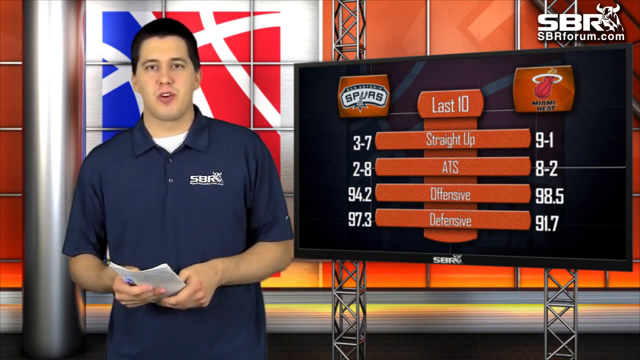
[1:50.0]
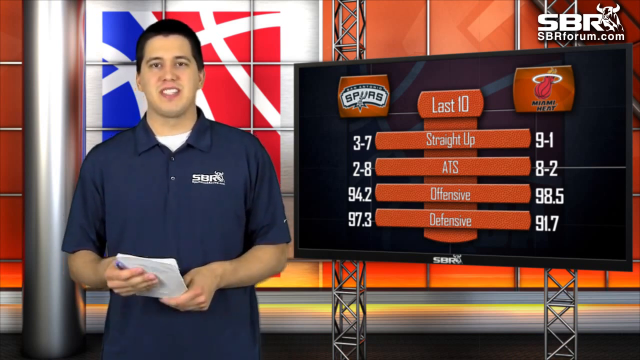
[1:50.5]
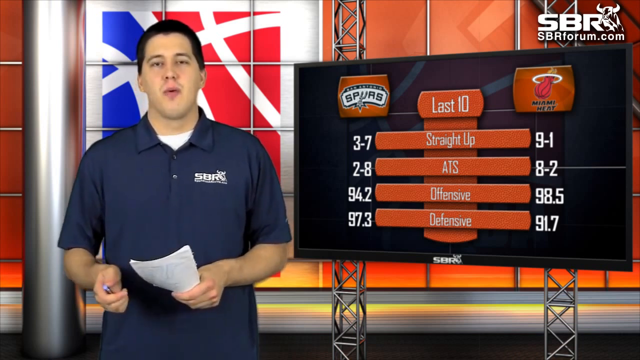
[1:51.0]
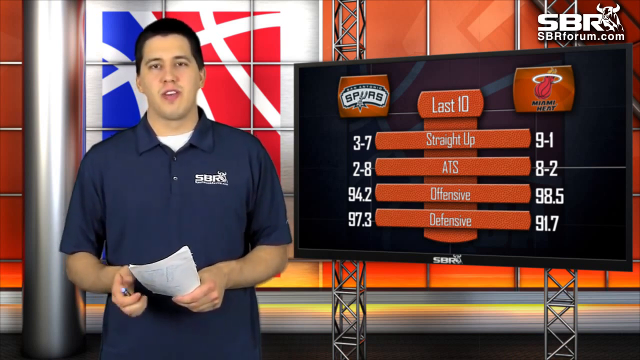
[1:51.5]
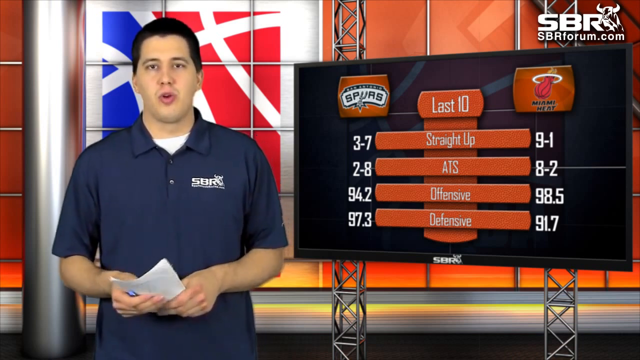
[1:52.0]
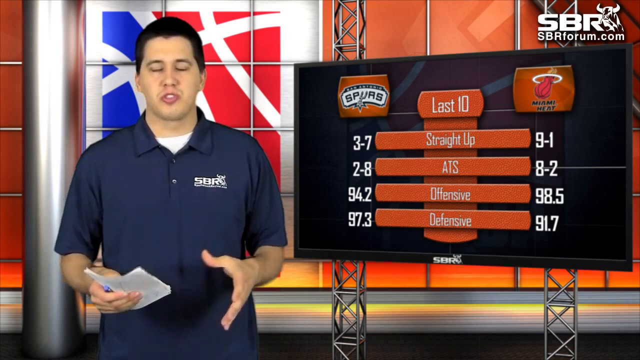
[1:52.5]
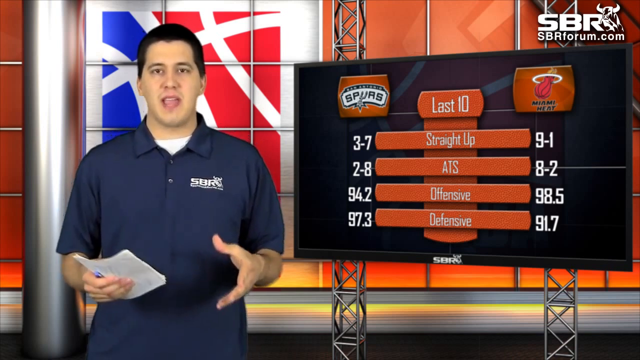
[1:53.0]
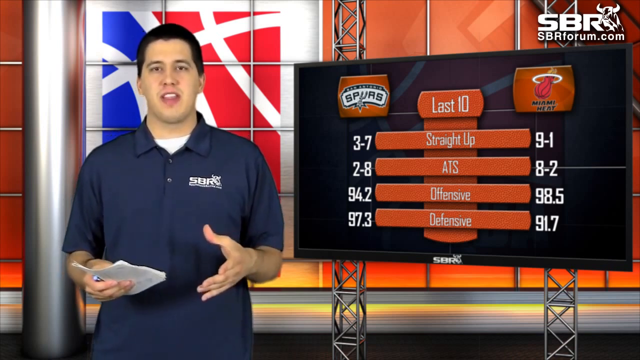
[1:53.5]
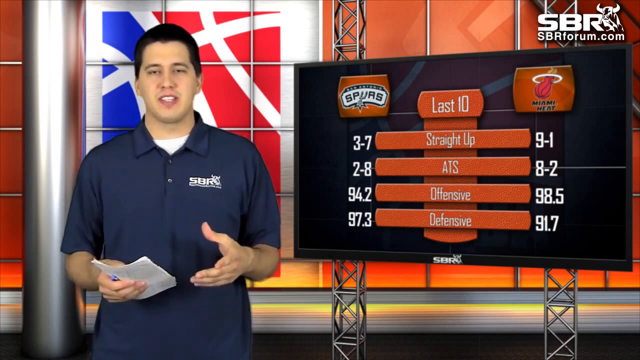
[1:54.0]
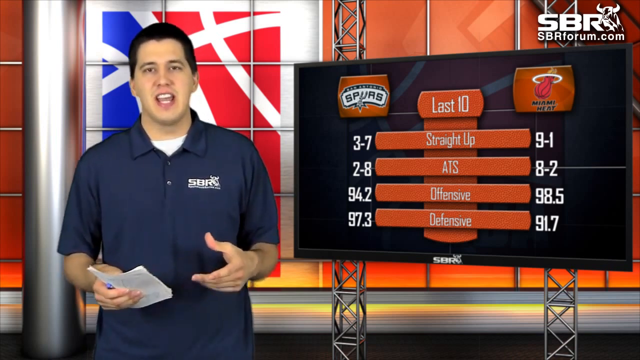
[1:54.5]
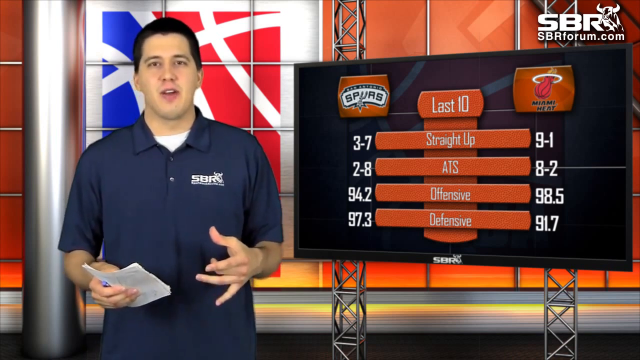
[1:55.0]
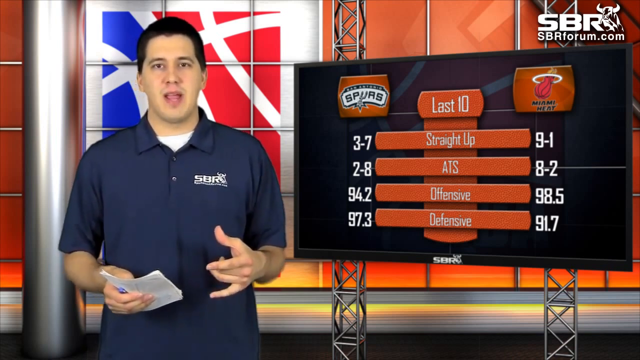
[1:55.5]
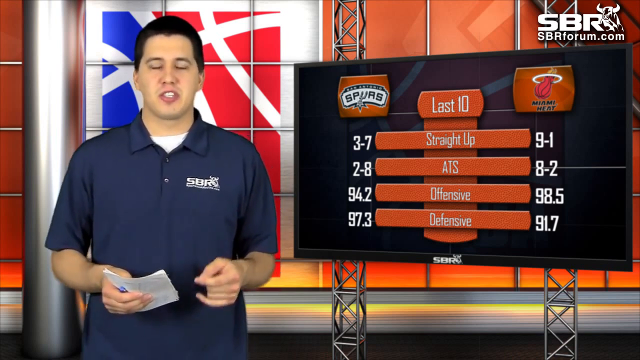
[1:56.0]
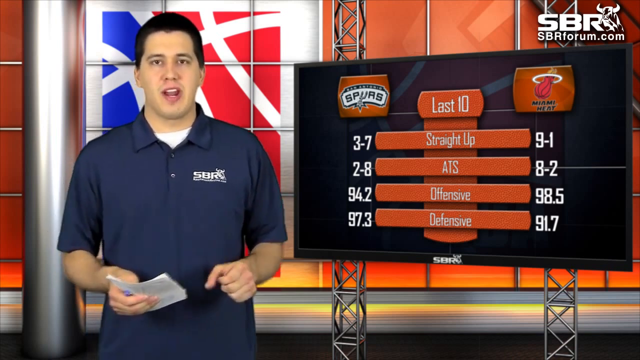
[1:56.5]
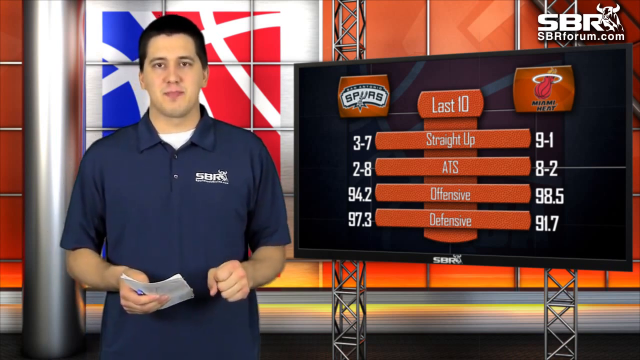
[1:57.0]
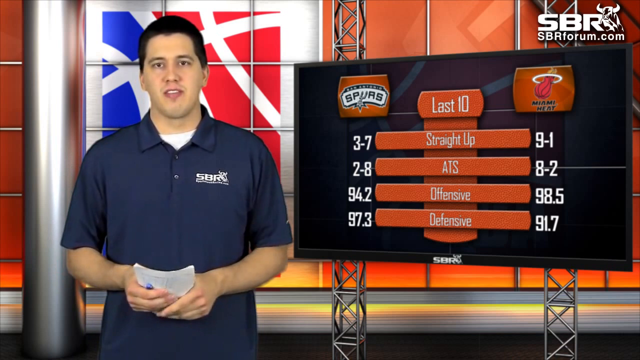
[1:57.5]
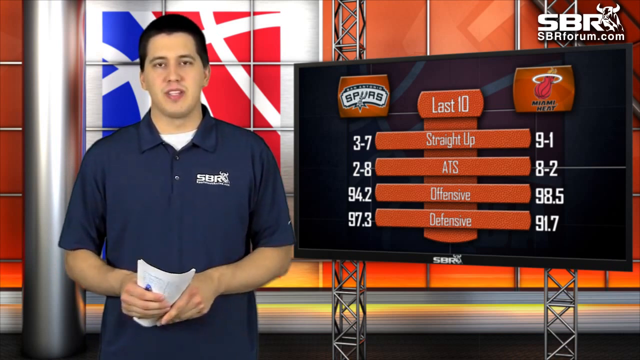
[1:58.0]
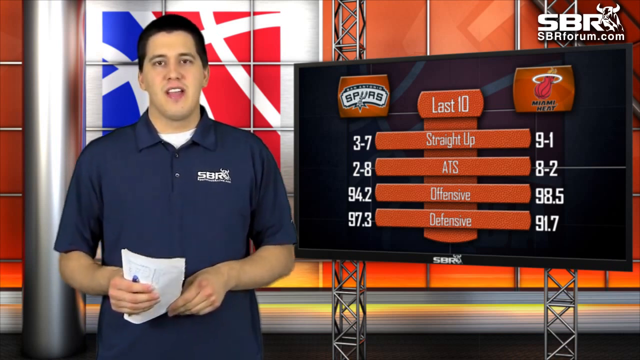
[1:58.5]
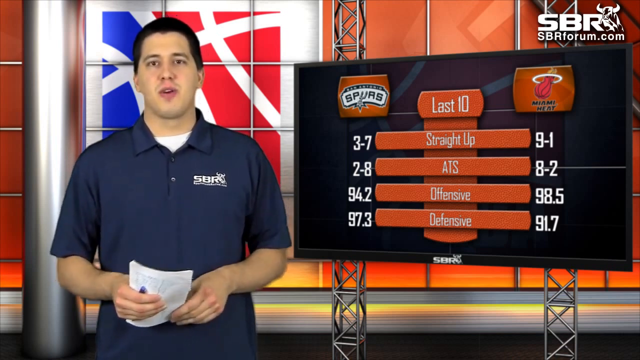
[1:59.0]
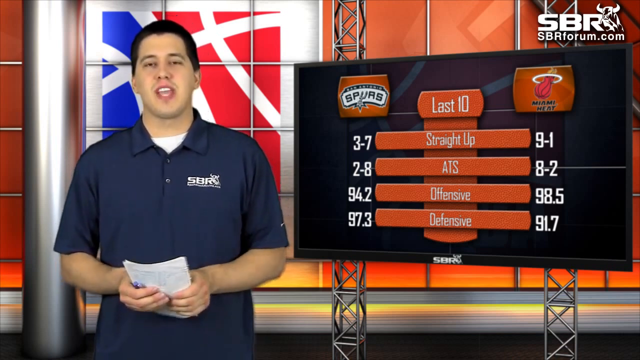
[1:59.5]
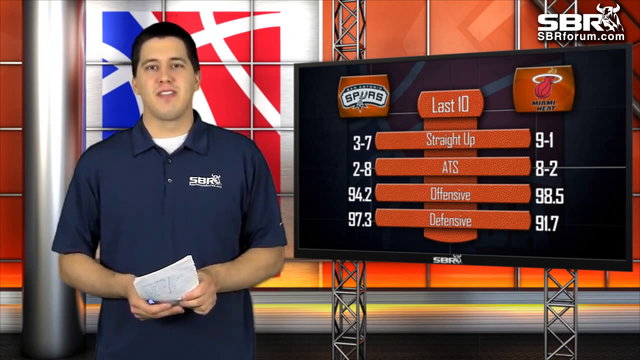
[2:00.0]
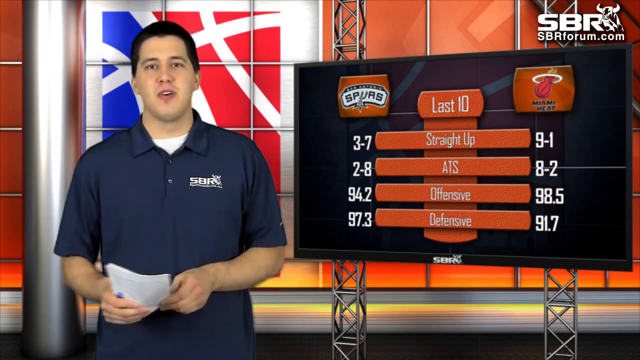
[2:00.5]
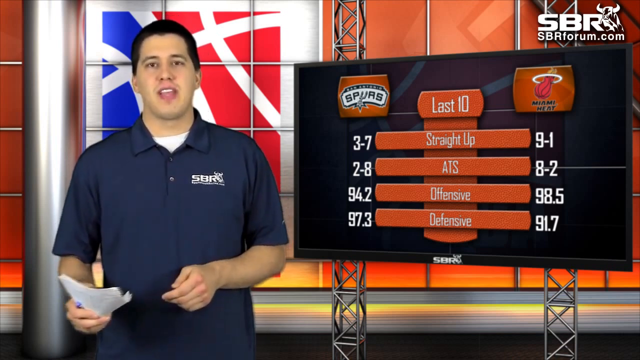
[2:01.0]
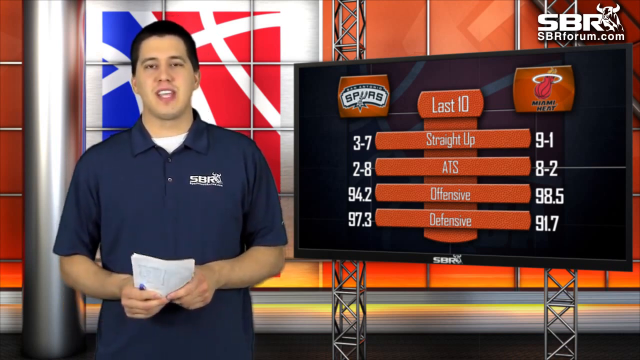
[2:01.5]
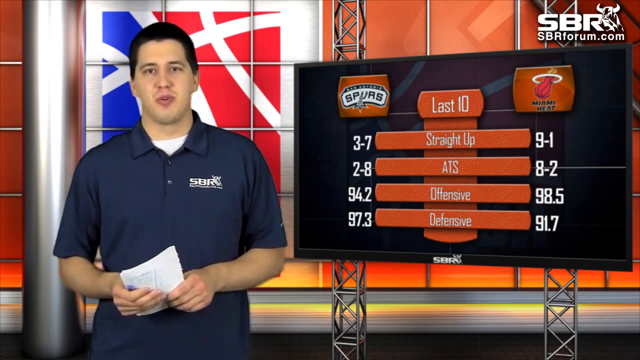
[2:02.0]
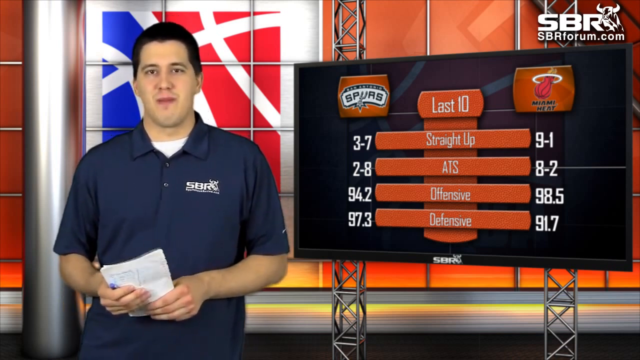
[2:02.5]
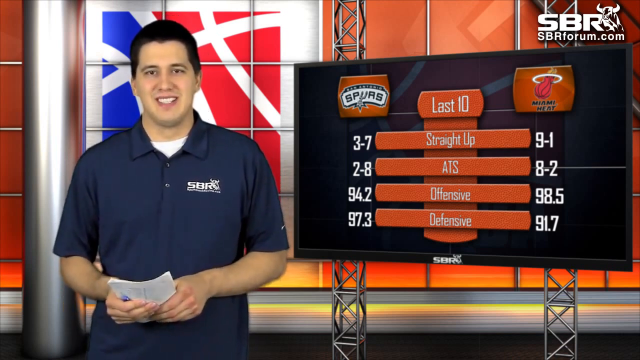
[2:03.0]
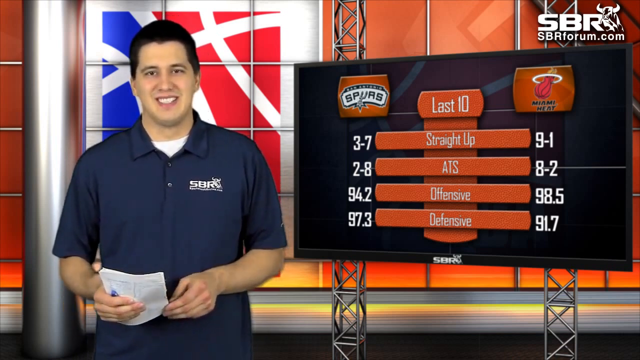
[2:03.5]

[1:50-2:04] A dark blue box is on the screen. The man holds some type of pamphlet in his hand. The screen shows a comparison of statistics, with numbers attached to the sections or charts.